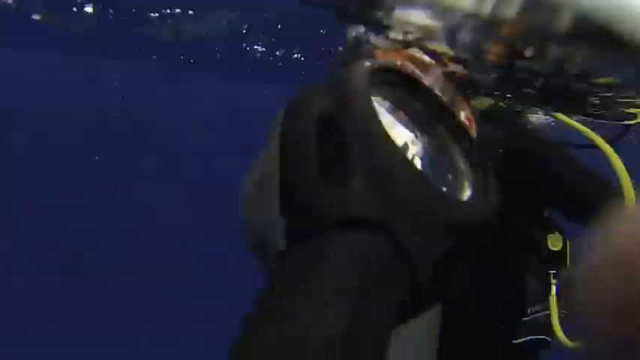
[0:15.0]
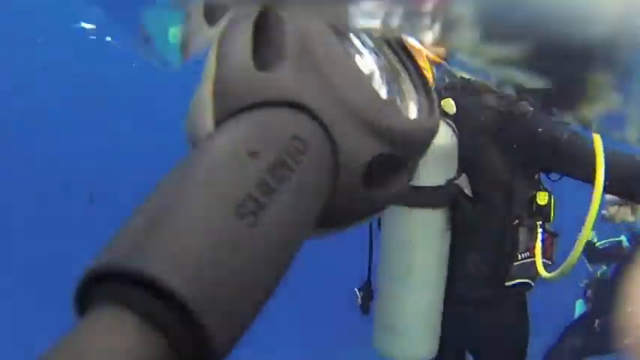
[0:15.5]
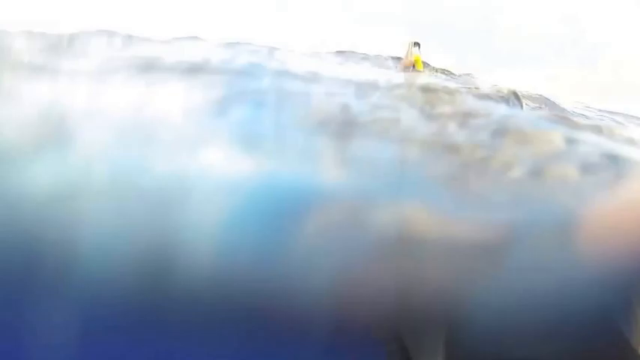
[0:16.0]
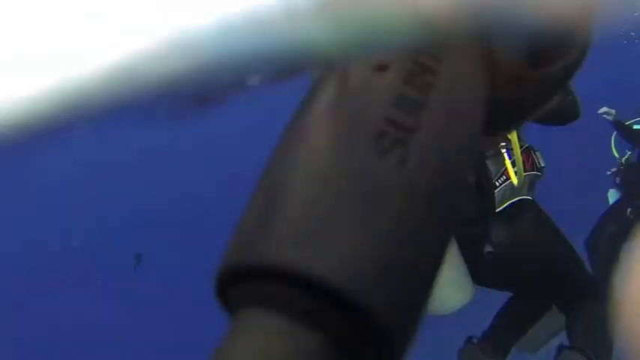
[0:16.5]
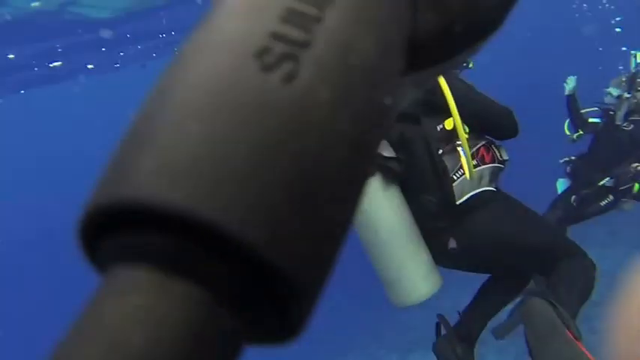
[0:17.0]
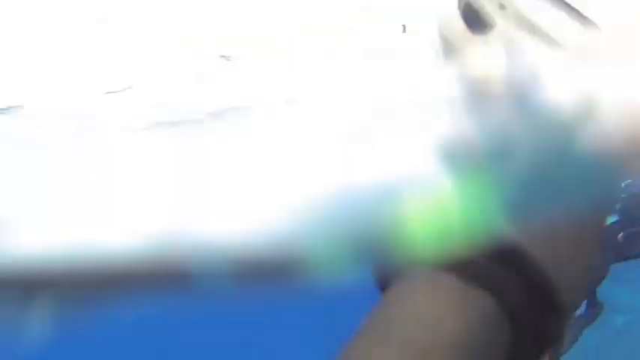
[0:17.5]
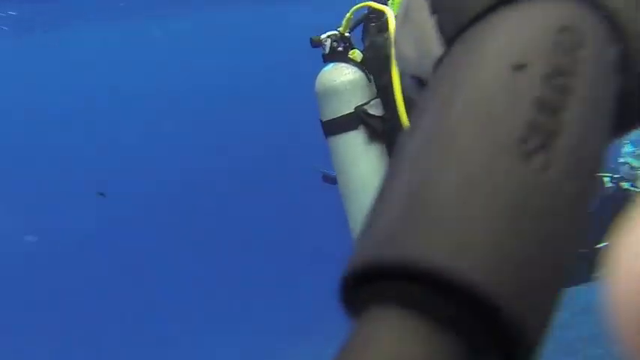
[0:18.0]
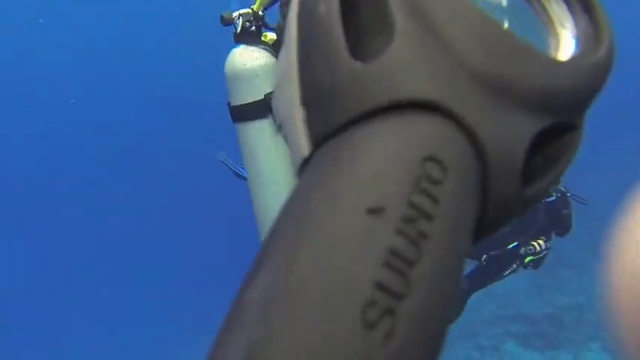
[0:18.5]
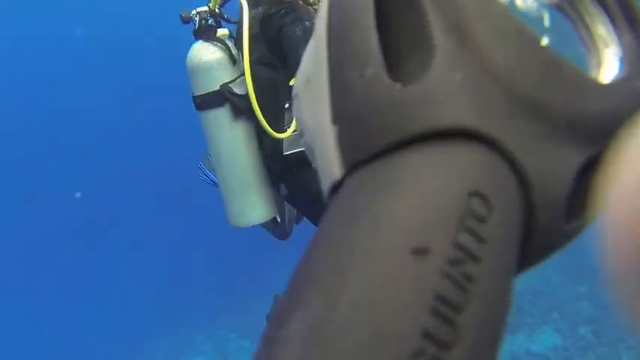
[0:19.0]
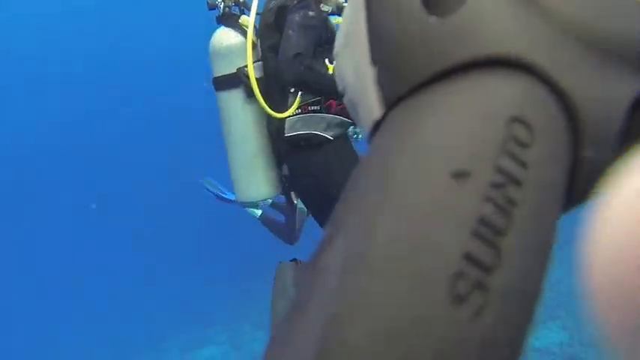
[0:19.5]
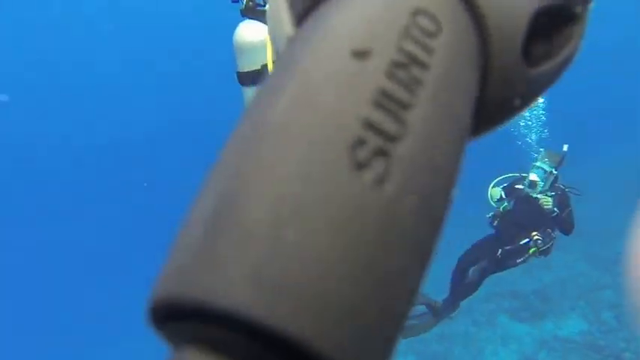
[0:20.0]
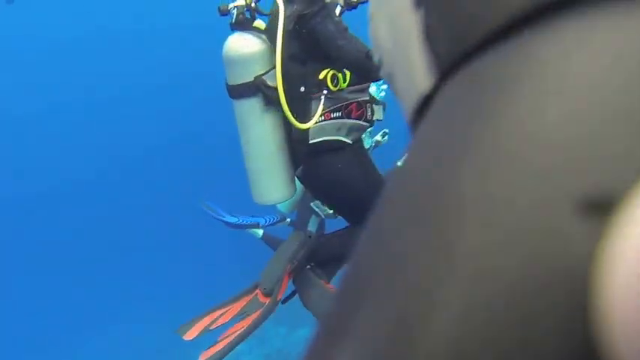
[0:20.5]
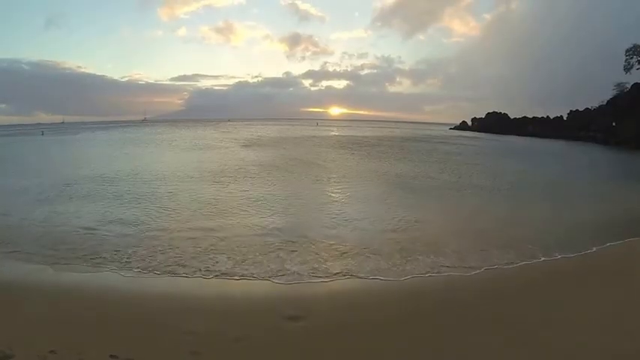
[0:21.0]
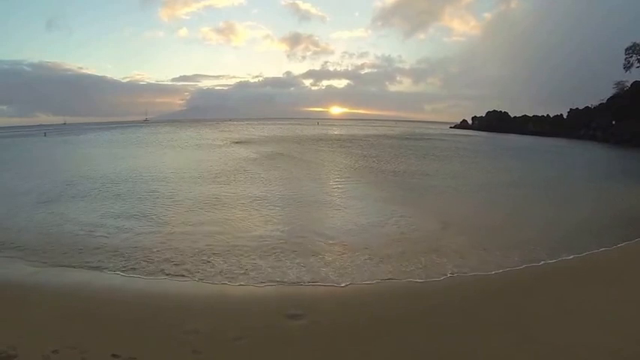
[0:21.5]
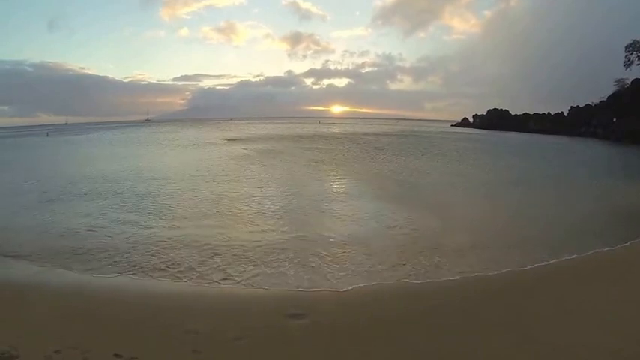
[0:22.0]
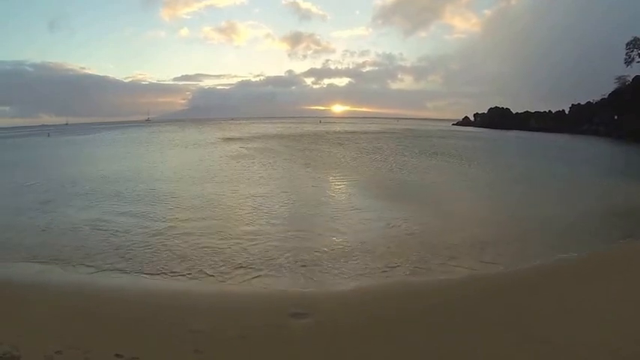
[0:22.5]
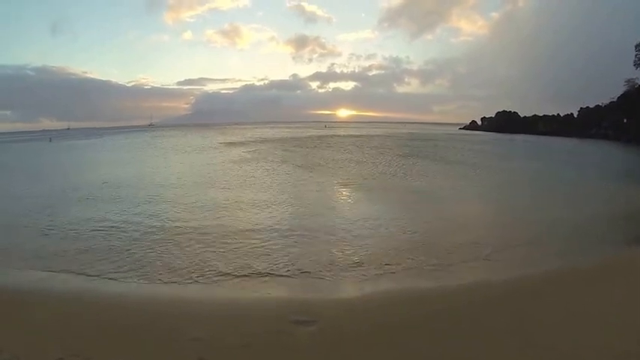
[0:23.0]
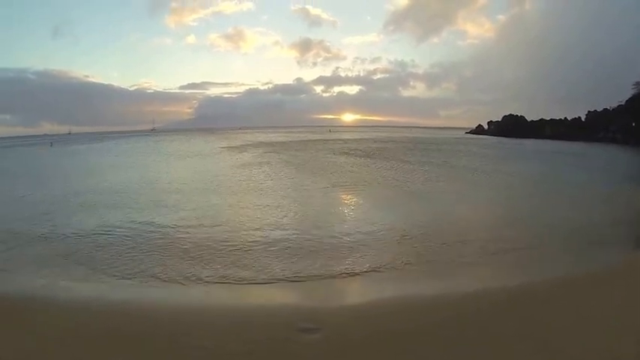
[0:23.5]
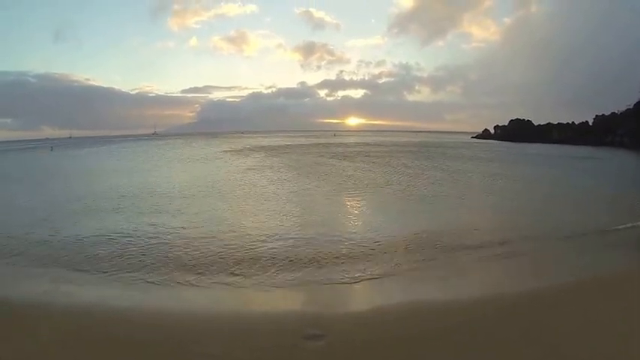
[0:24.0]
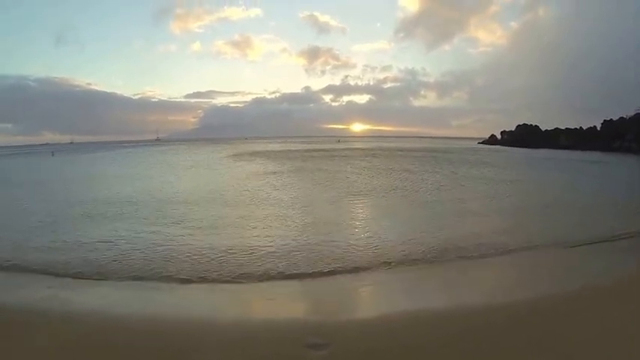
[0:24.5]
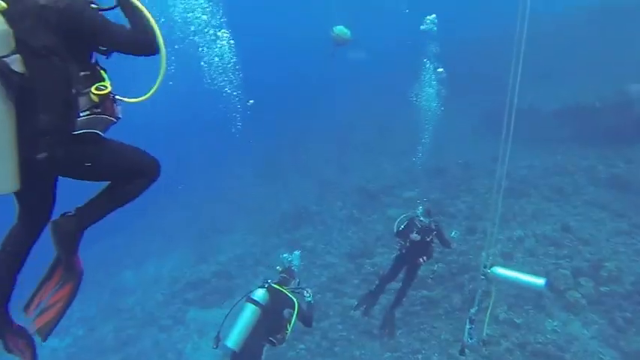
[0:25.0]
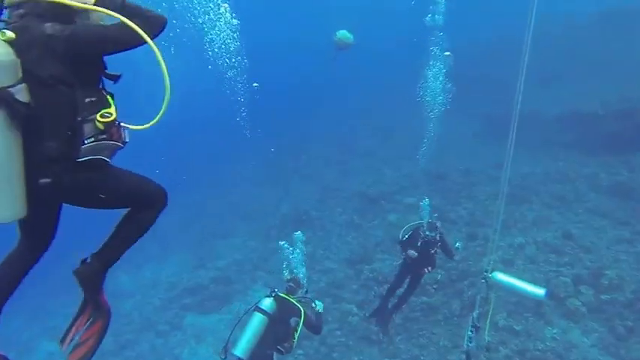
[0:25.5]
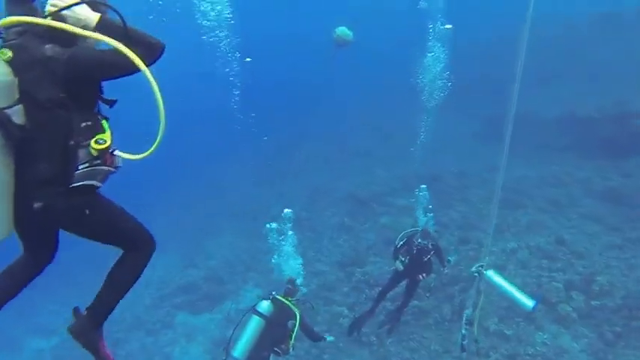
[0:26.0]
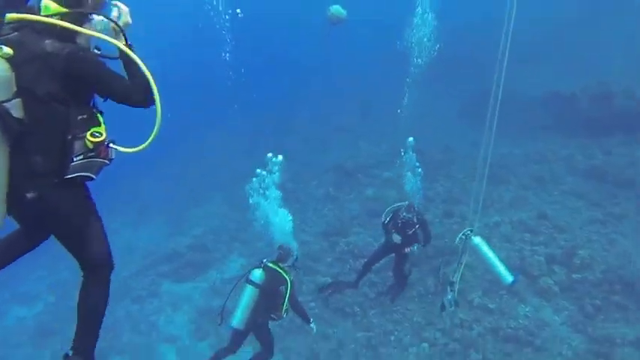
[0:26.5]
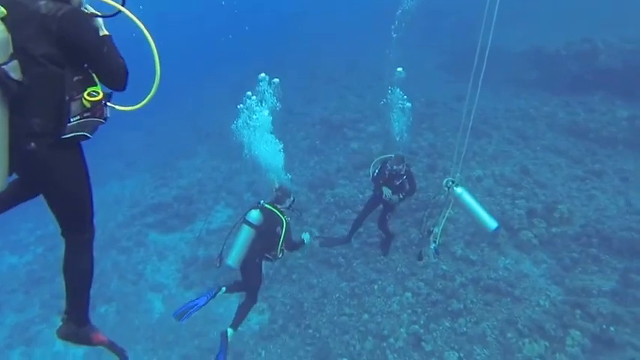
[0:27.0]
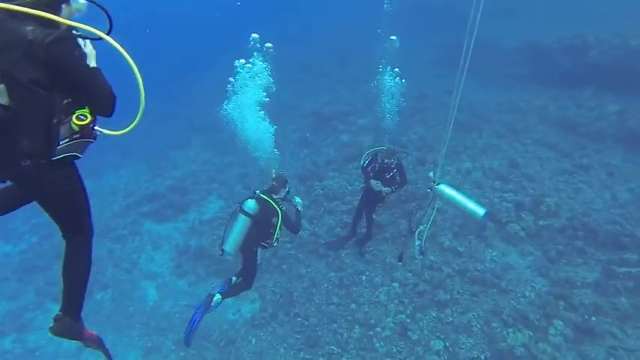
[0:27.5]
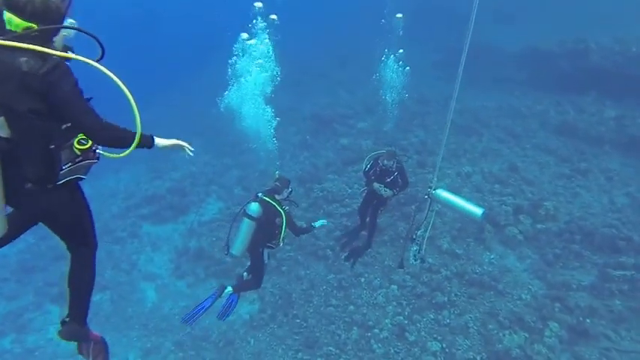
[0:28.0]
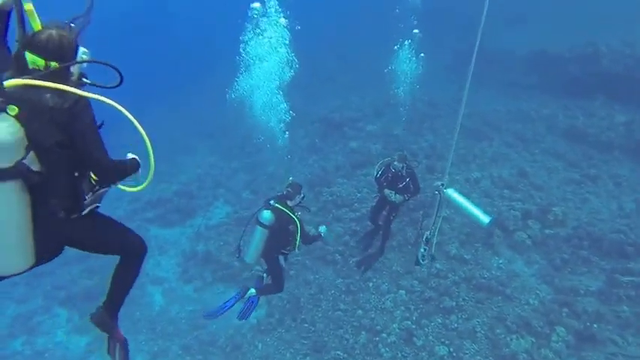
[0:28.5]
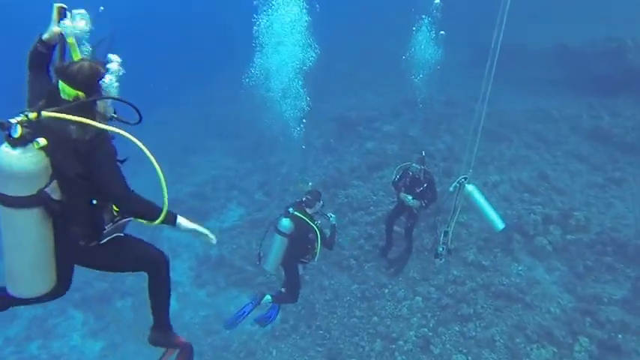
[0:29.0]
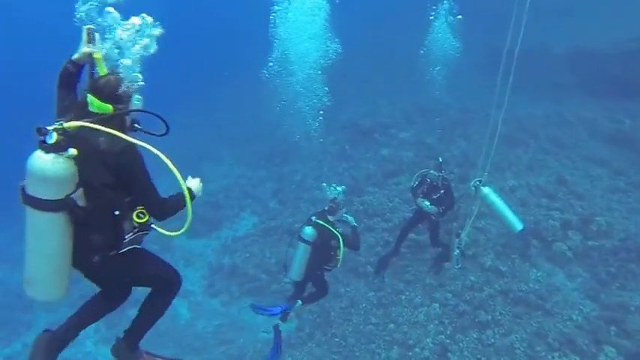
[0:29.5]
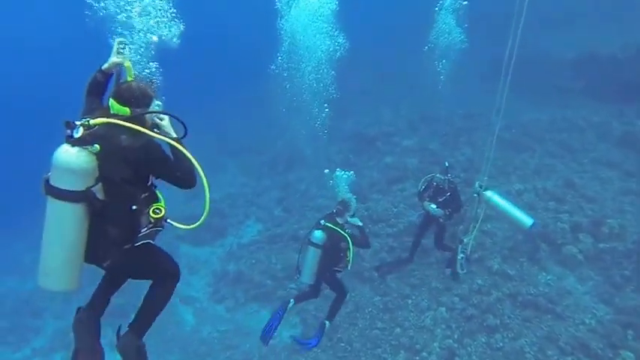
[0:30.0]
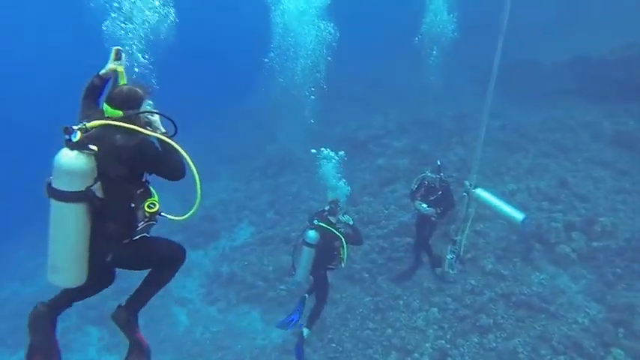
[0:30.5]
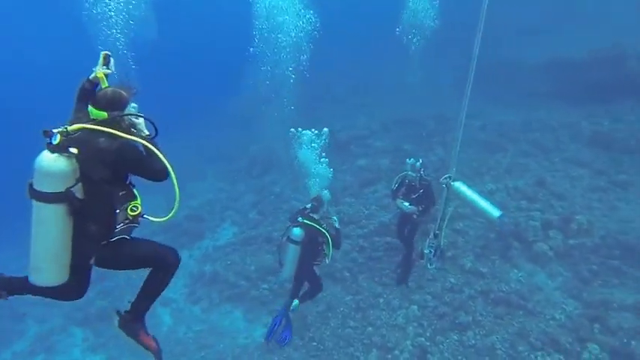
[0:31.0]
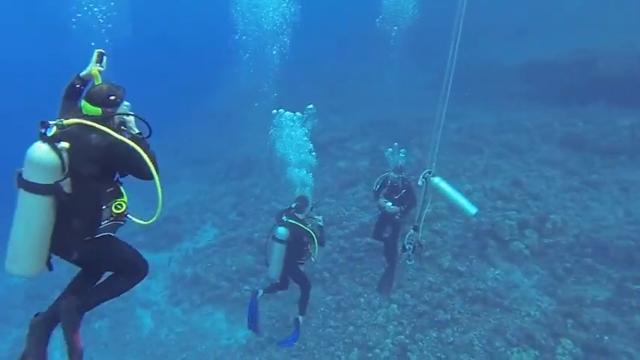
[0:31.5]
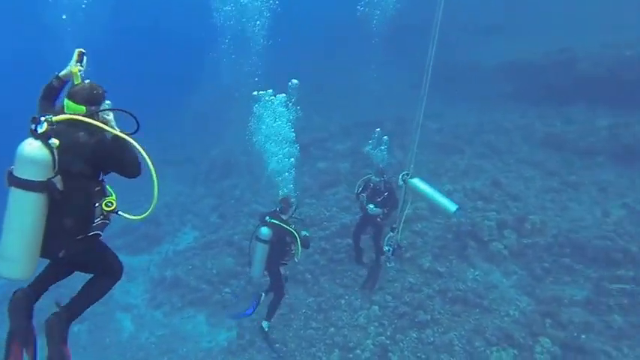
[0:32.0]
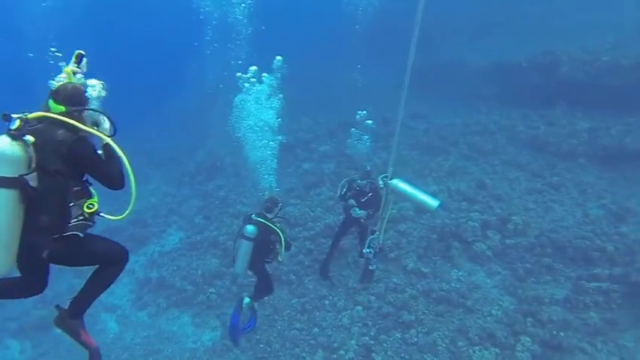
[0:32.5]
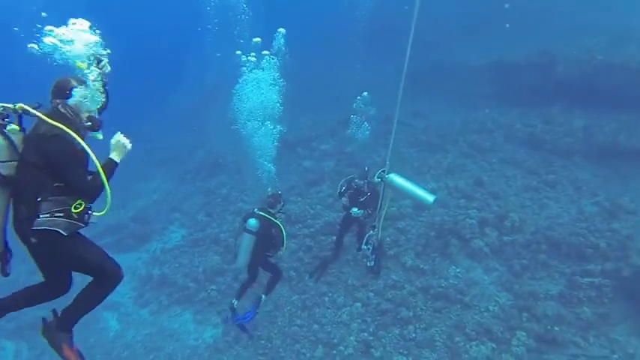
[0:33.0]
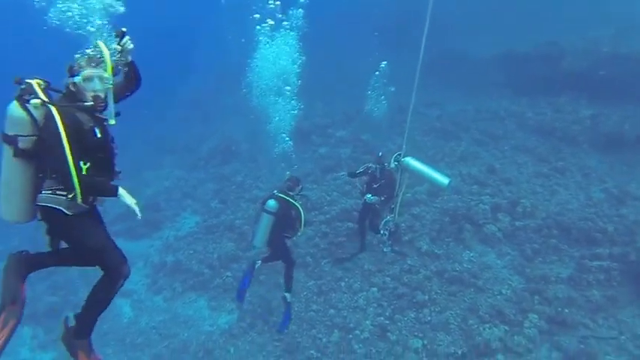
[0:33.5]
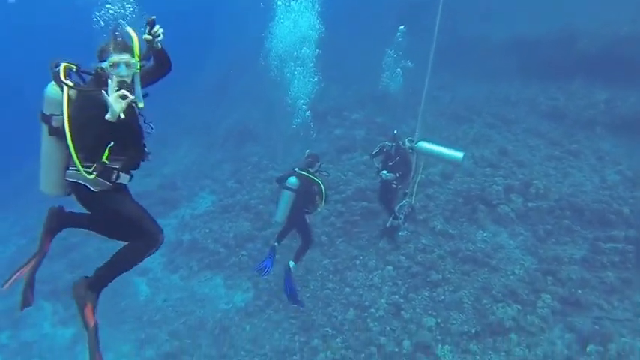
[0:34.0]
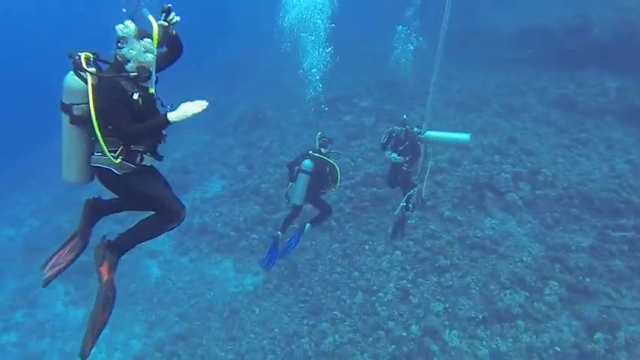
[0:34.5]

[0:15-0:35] The scene opens underwater, with blue water. The camera seems to focus on a black device bobbing underneath and over the top of the water. At the top left is the image of a person in a circle, with white lettering beside it reading "GoPro Hawaii scuba diving". Some guys appear to be scuba diving in the water; they wear black suits, have cream-colored air tanks strapped to their backs, and have yellow tubing. The next scene shows a sunset through white clouds, with grayish water and gray sand just below the feet, what seem to be almost black rocks to the right side, and ripples in the water. The following scene is underwater again, with about three guys in black scuba gear with yellow tubing and beige tanks. The water is blue, and below them seems to be a brown rock formation as they come down with their scuba gear. The person closest to the camera person turns around and motions to the camera person with the okay sign.